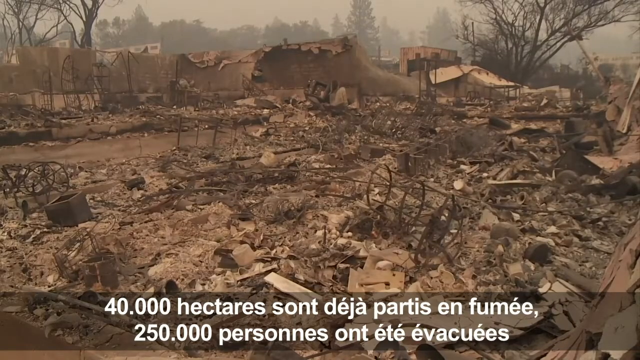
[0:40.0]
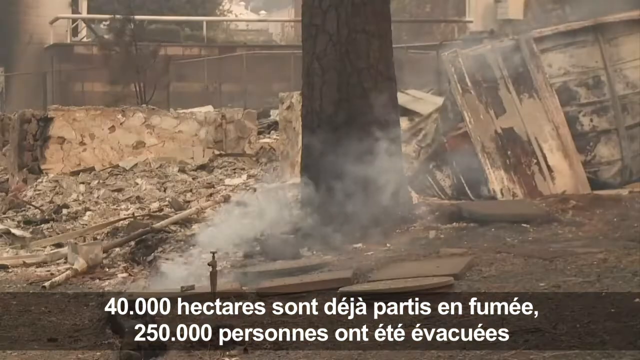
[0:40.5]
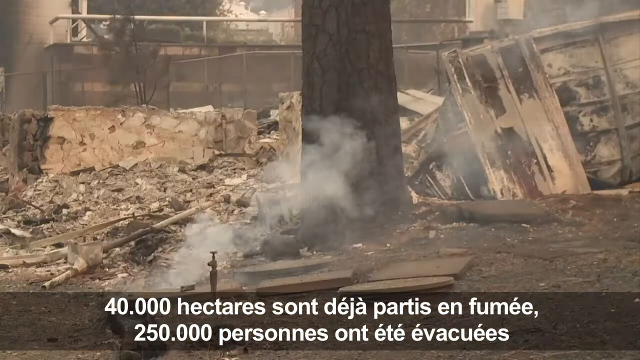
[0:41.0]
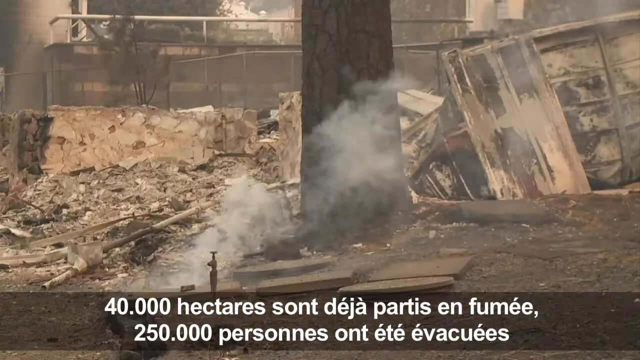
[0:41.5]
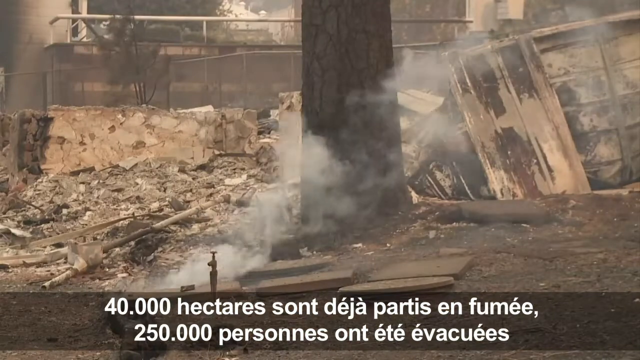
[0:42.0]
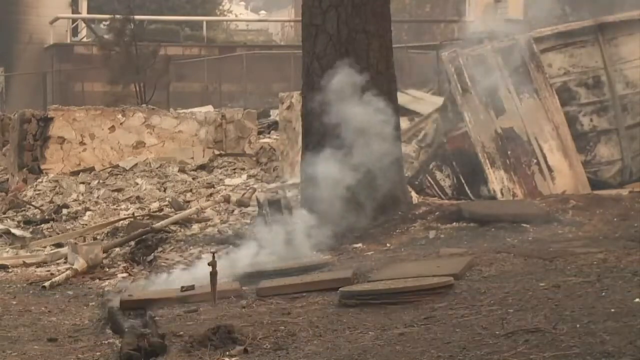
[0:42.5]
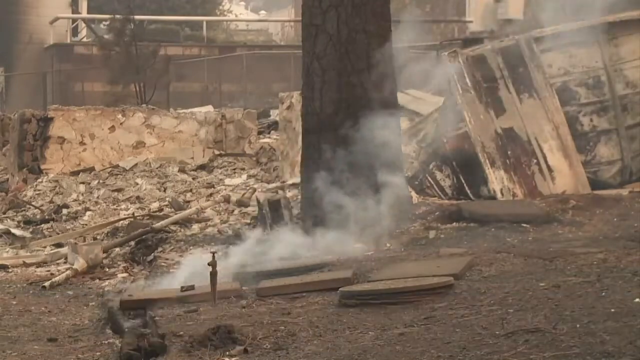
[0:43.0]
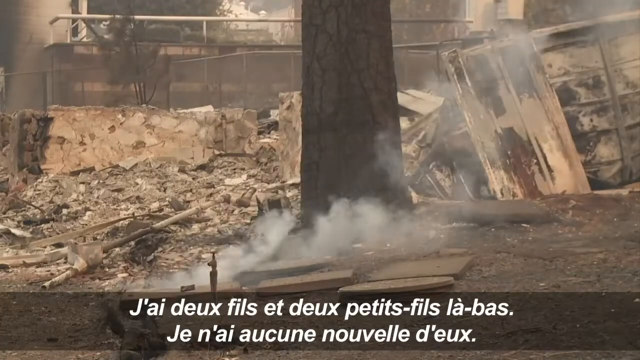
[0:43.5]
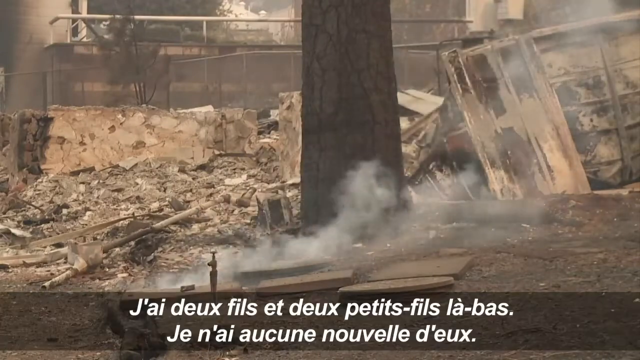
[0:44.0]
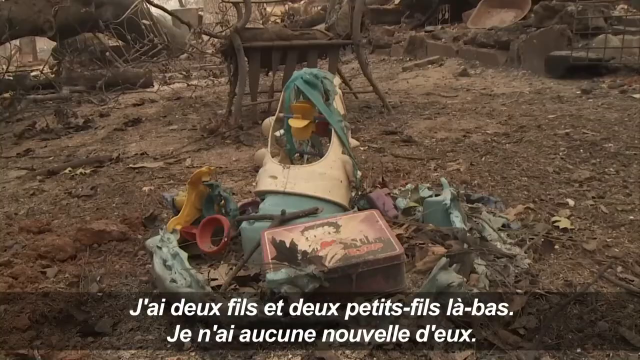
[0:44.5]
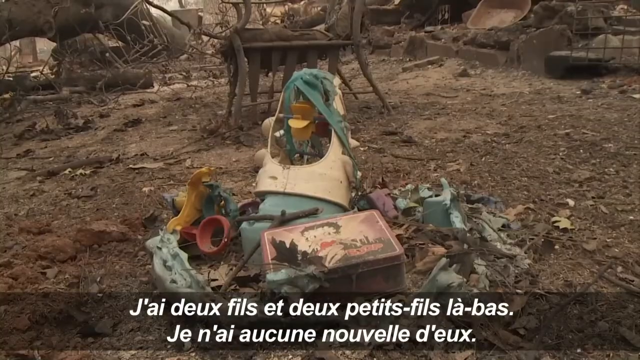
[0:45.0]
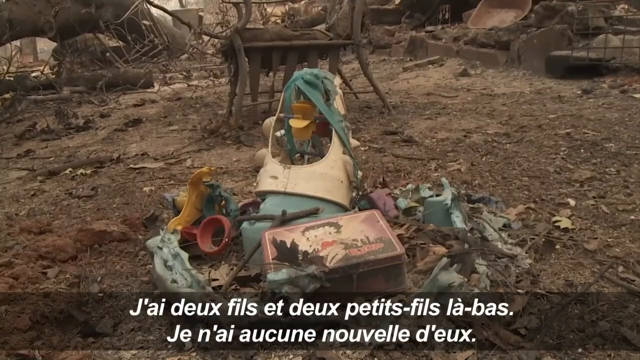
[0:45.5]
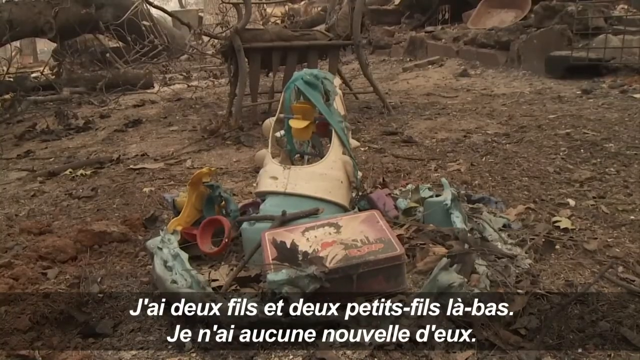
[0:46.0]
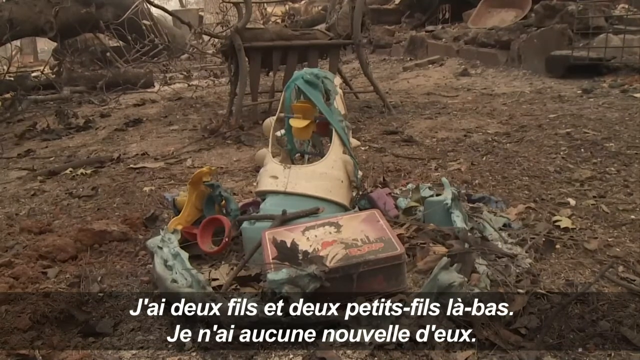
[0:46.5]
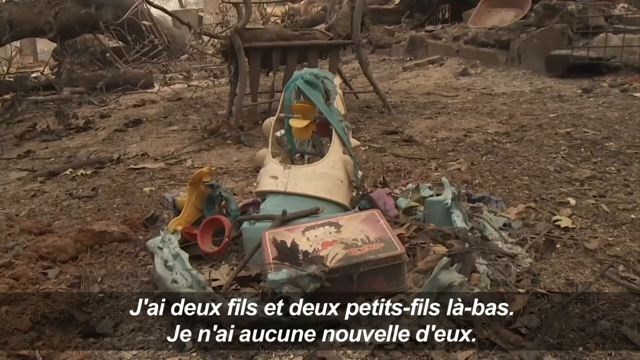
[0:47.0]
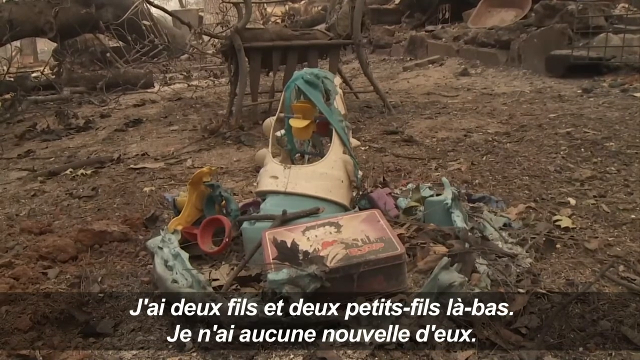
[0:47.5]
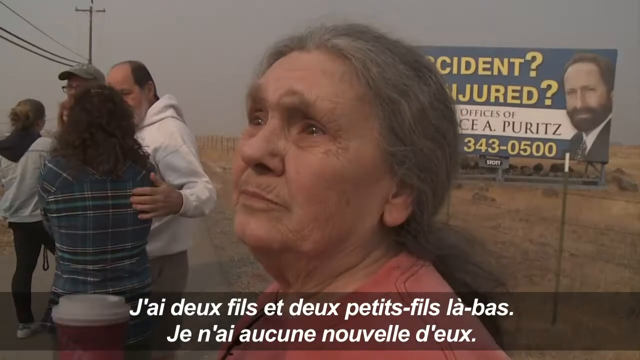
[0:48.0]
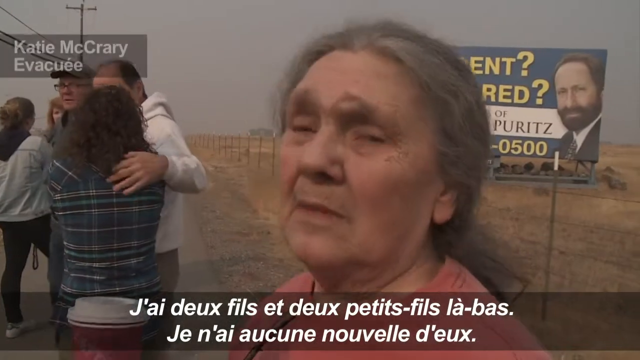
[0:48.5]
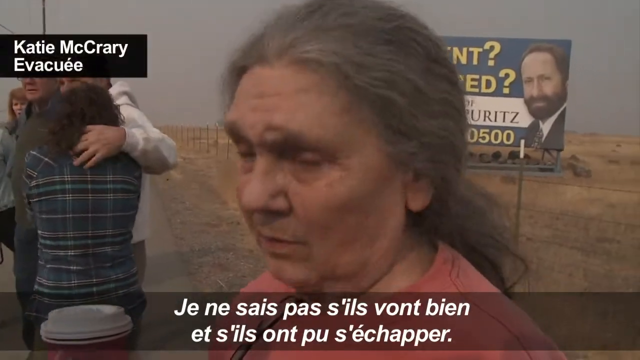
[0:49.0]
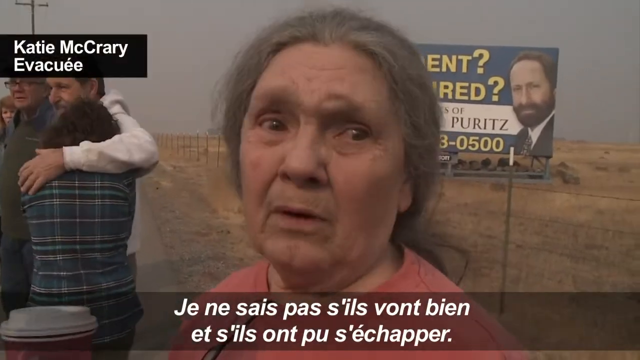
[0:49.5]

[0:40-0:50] A broken car is visible, and a lady is crying. Smoke is still rising and all the cars are demolished. A lady explains something but breaks down. Two people hold each other, crying. Firemen are there. Houses are still standing, and people are standing around. People continue to speak to the news.